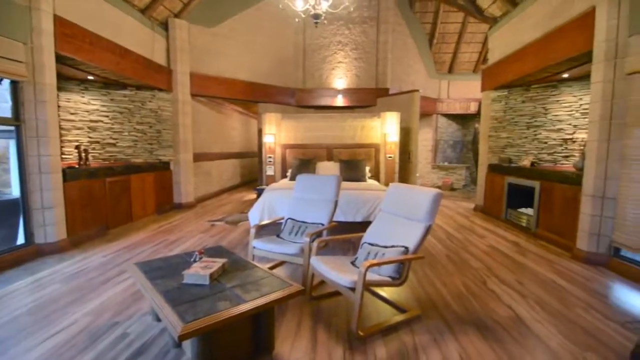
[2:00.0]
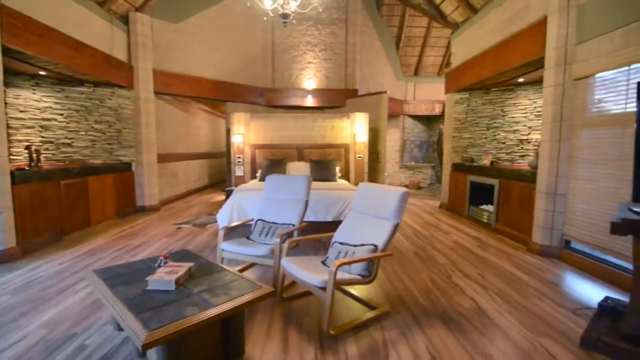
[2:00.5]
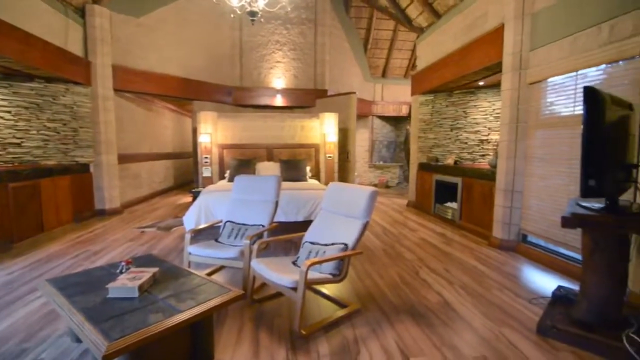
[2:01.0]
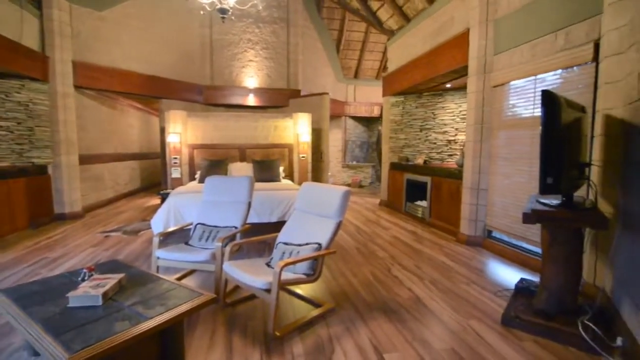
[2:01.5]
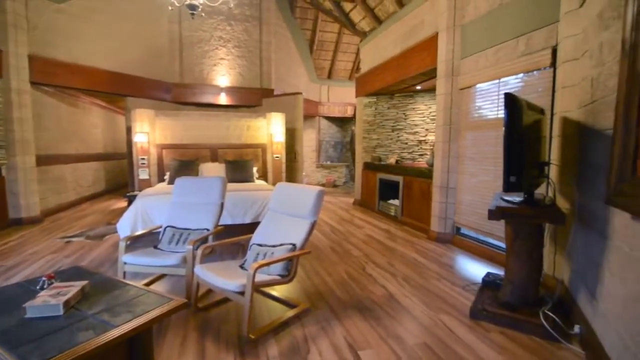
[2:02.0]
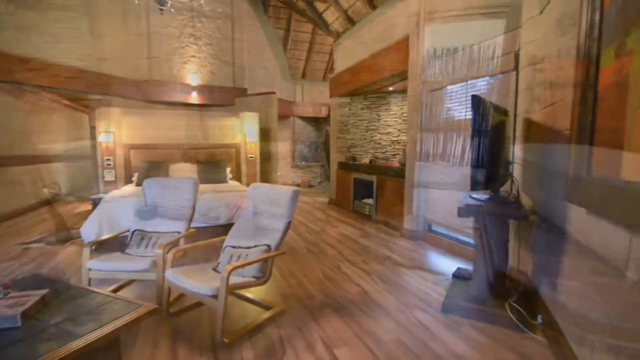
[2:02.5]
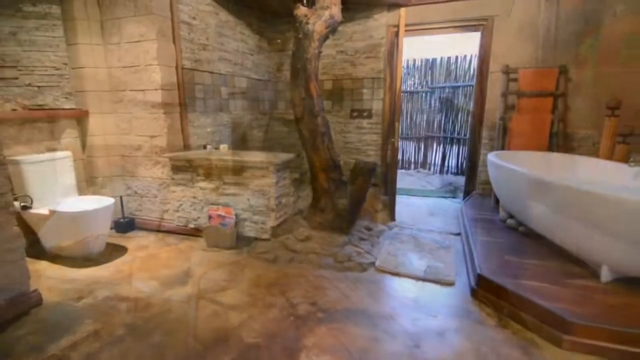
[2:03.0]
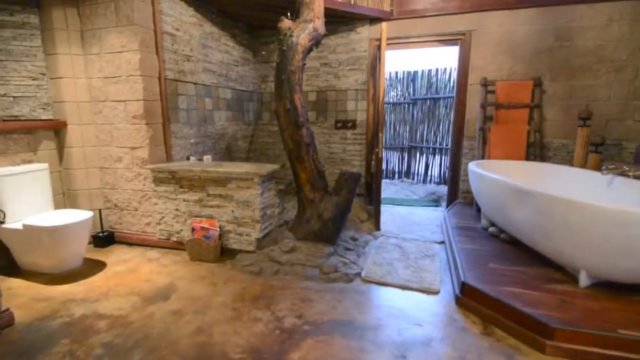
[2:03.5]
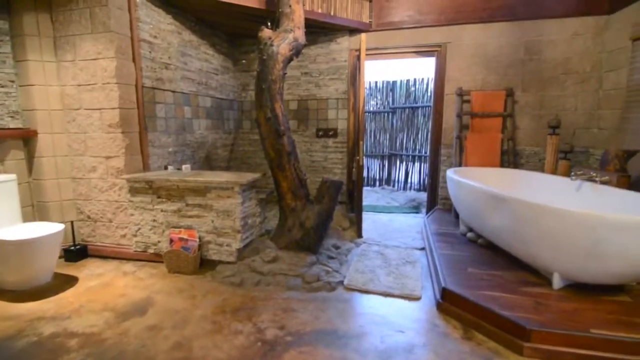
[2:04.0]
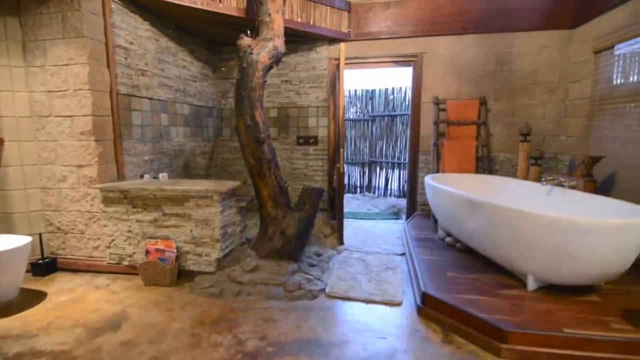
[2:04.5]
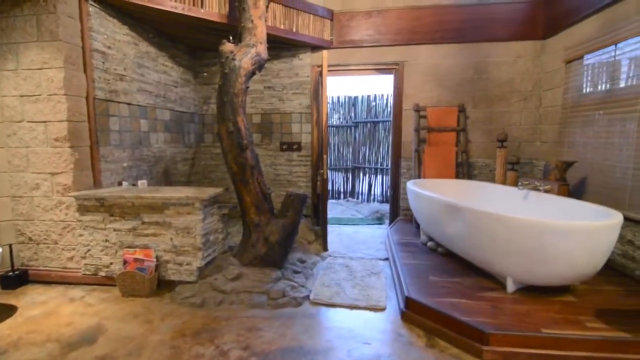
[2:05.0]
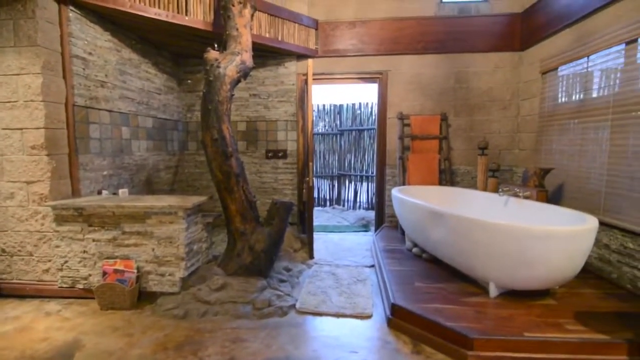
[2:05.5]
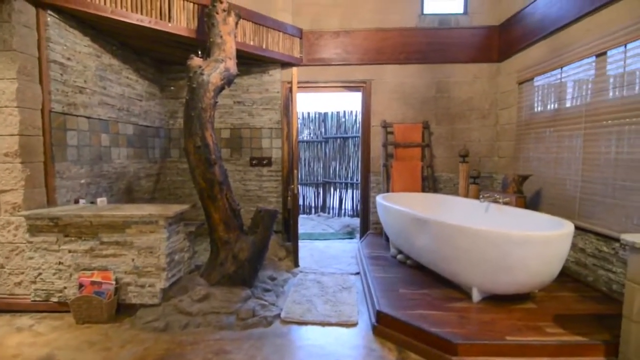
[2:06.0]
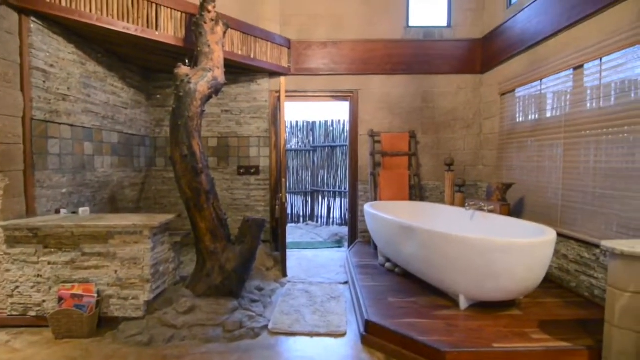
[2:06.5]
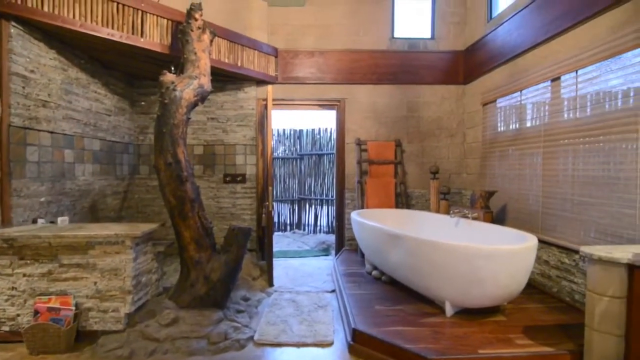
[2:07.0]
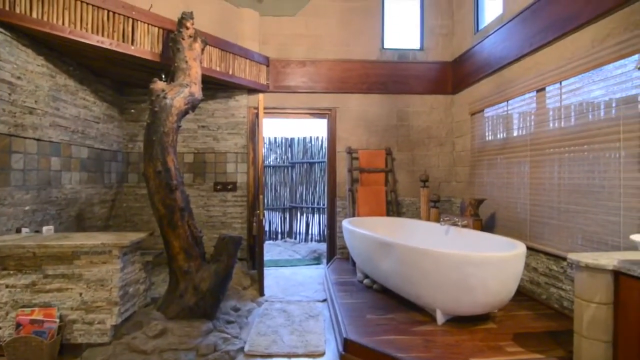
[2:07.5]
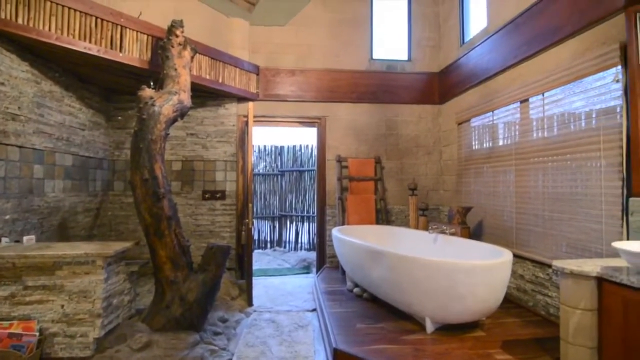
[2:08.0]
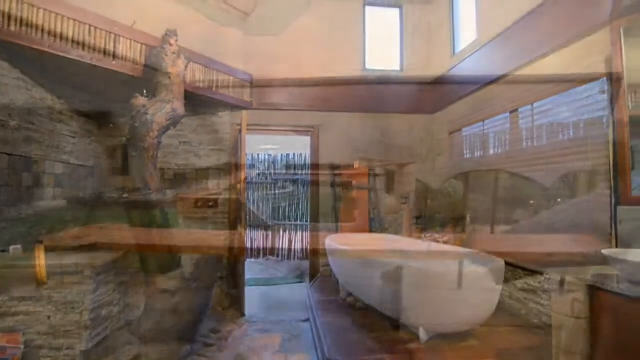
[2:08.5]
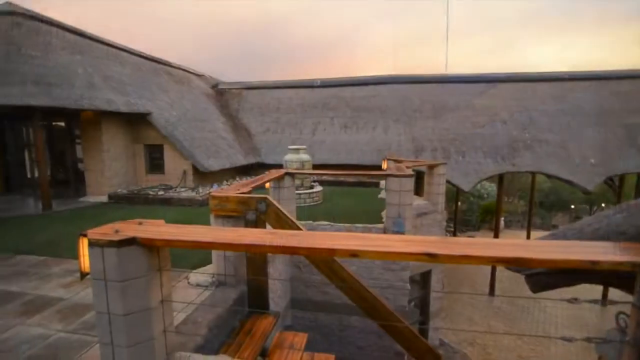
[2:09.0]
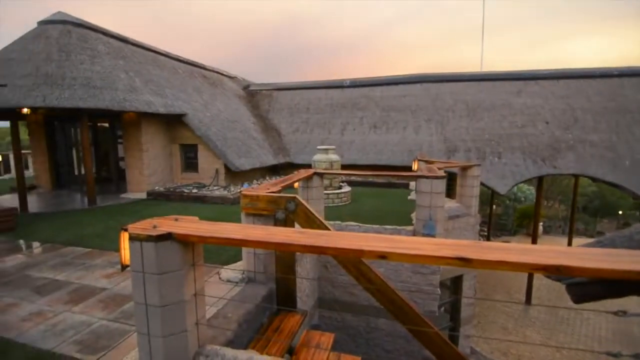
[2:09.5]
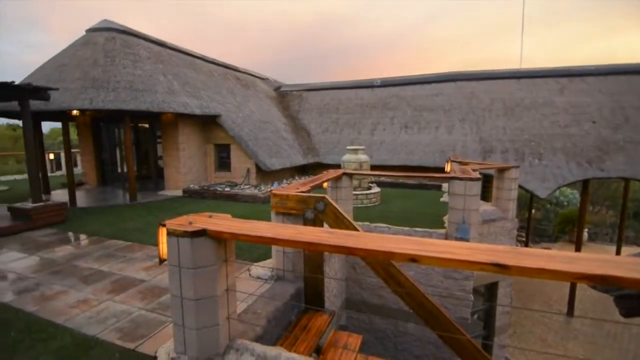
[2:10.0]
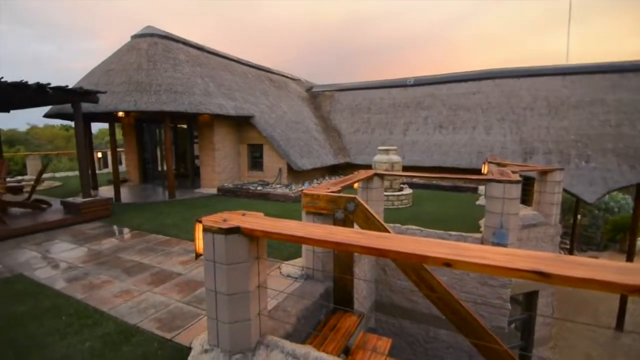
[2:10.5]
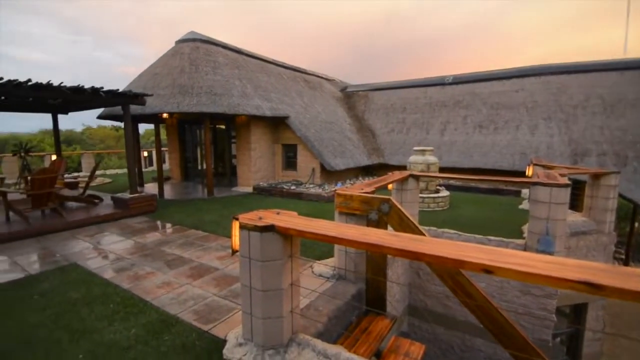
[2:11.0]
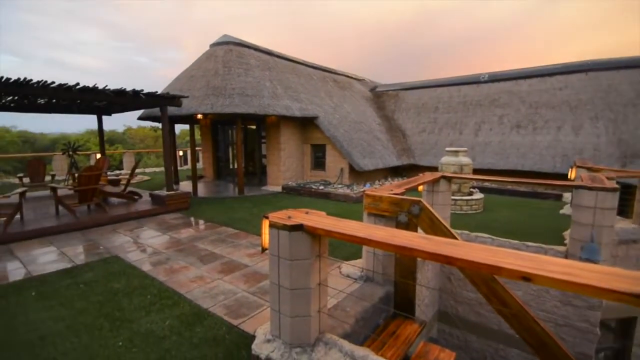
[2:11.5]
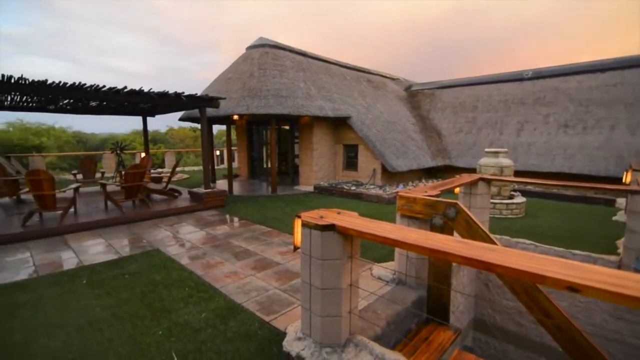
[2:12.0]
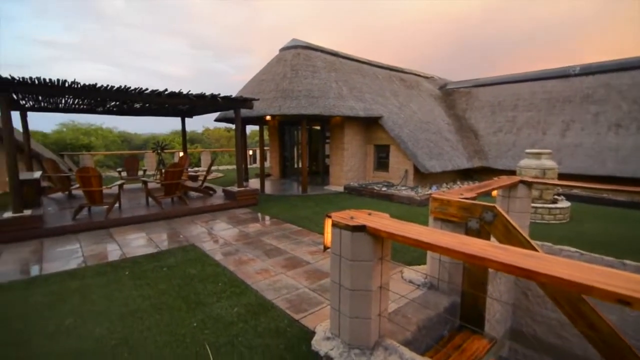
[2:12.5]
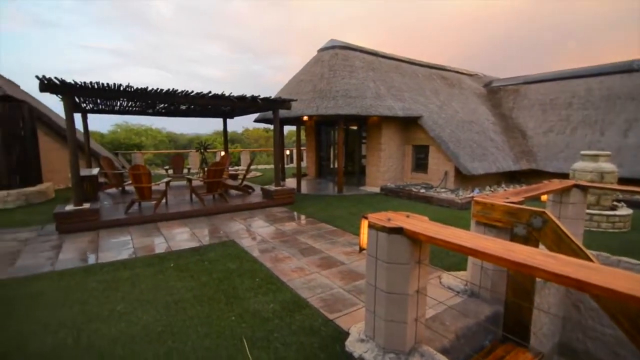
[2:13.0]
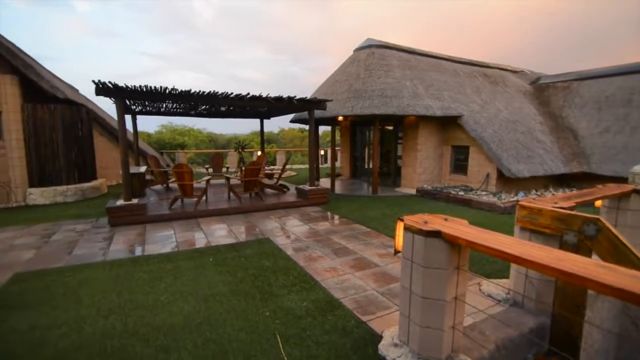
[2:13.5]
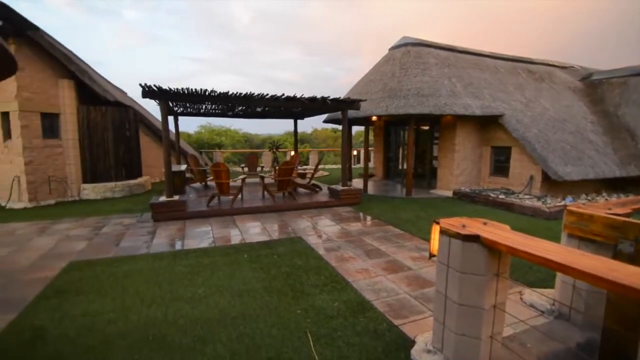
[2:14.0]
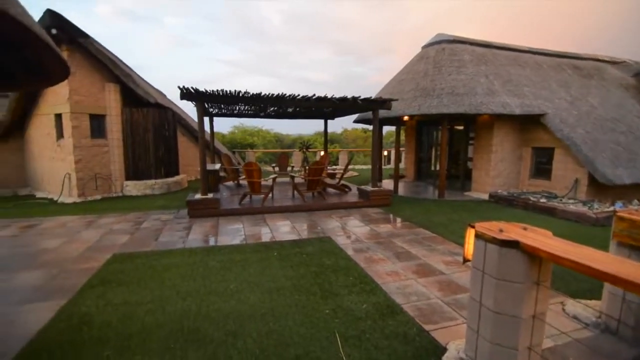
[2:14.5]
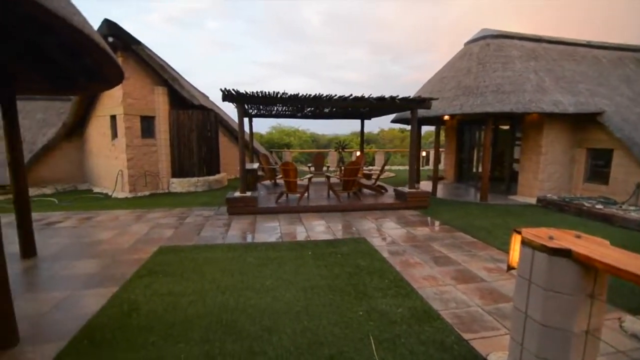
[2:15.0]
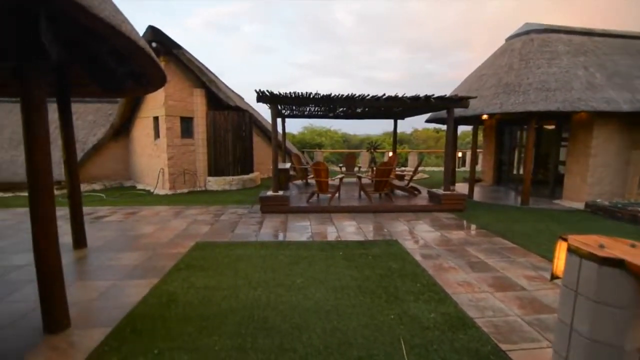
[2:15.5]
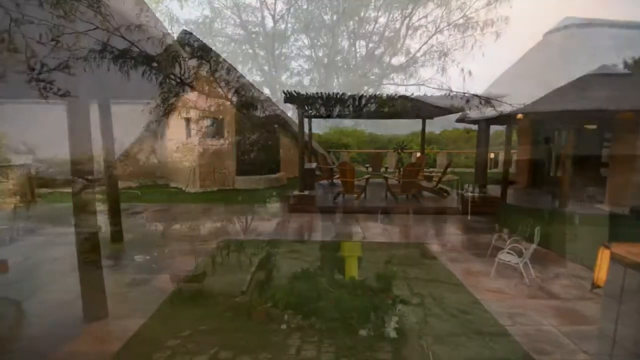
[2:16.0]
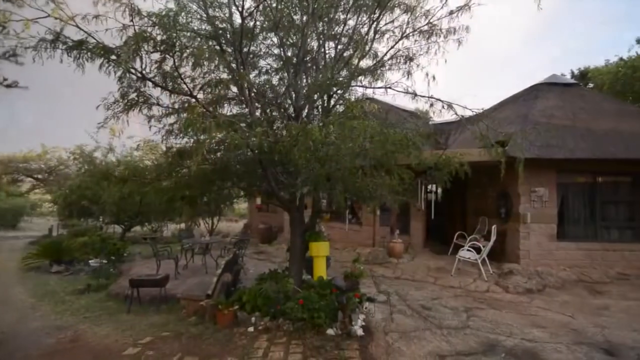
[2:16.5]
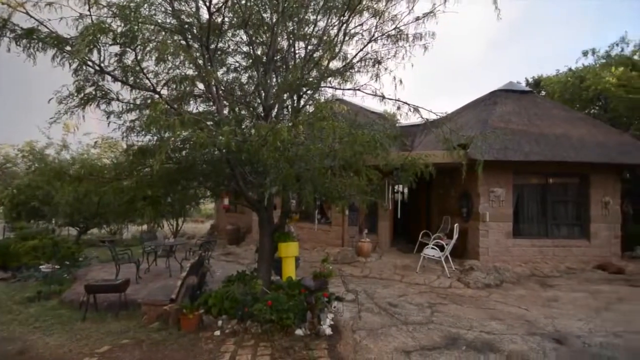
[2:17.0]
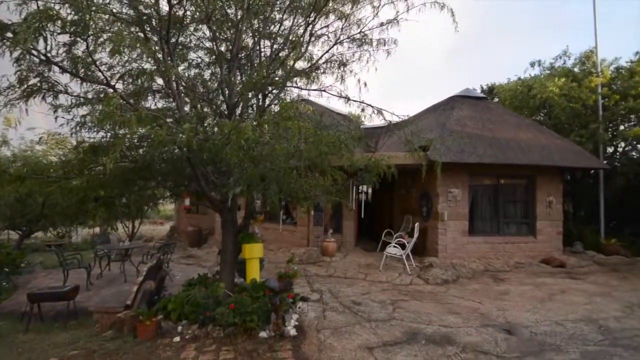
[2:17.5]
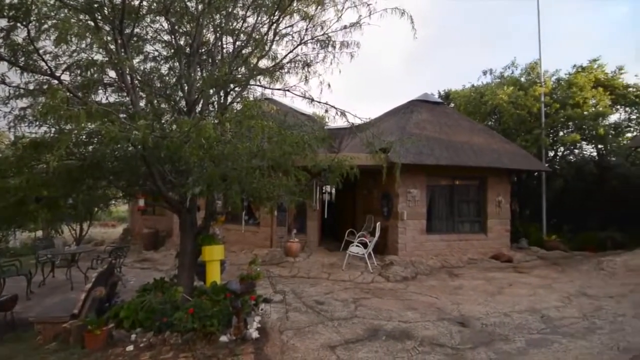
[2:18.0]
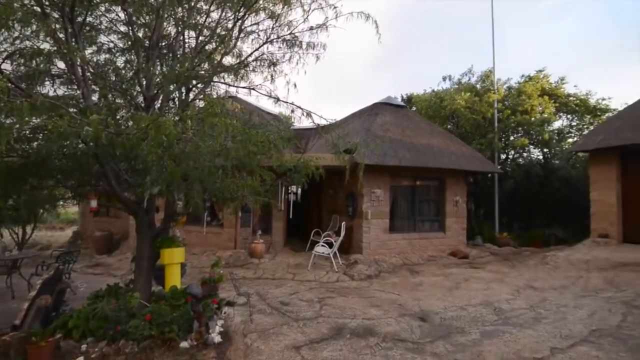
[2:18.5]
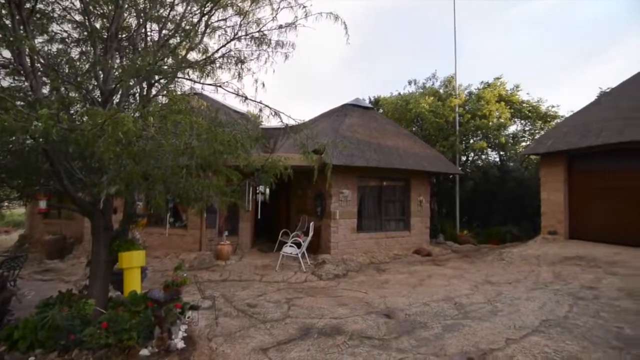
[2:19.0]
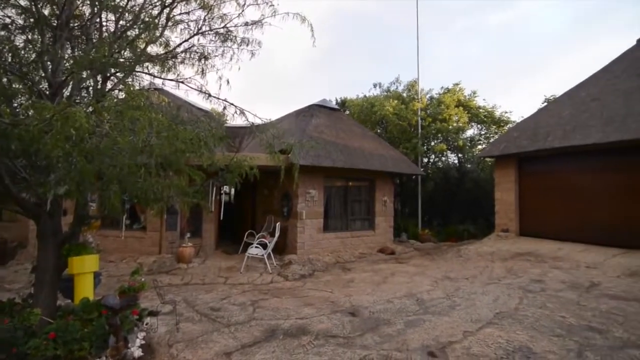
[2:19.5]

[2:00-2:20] Inside, the house has a very rustic open floor plan, and there is a tree stump in the bathroom. The view moves outside, which is very contemporary, with part of it a slanted roof. The outside looks like something may have happened to it; it looks uncared for, going from meticulous to run down and kind of abandoned. There are two little outdoor chairs right outside the door. Inside, the bathroom is very open and has an old-fashioned tub. The house looks either under construction on the outside or abandoned after something bad happened to it. There is no label or subtitles. Outside there is a stone walkway and a little gazebo-type structure with some chairs.